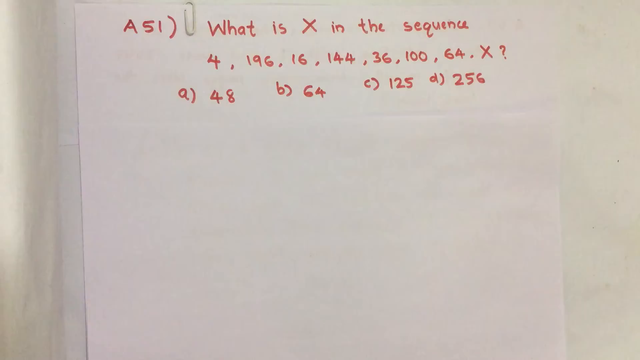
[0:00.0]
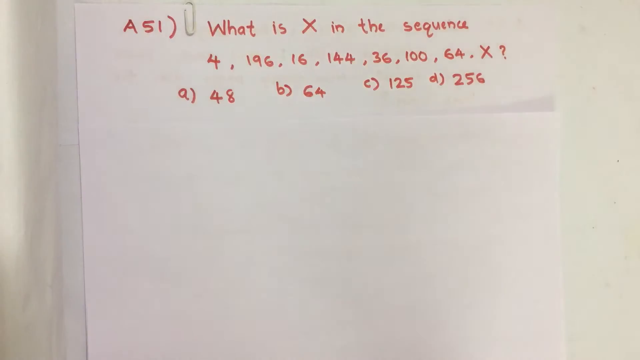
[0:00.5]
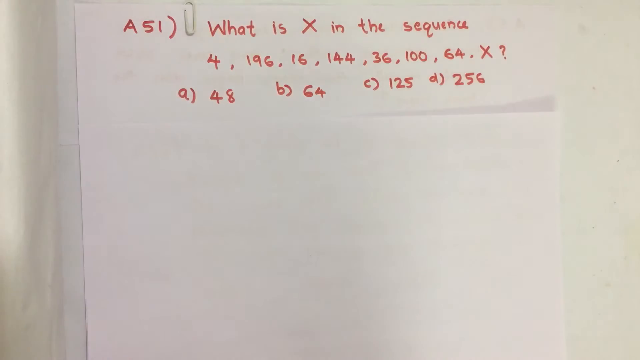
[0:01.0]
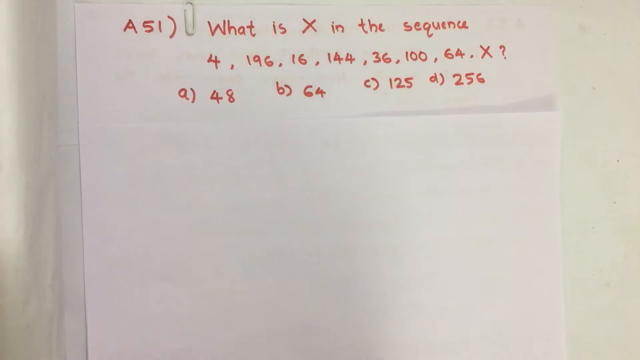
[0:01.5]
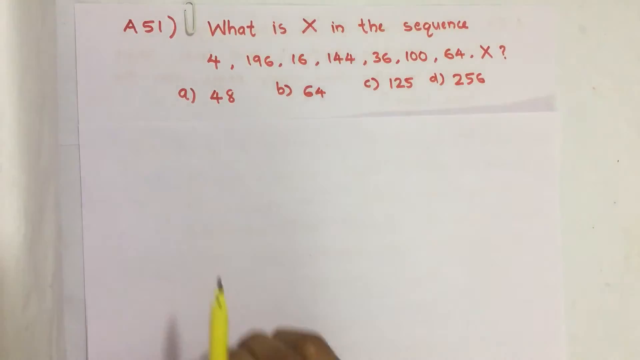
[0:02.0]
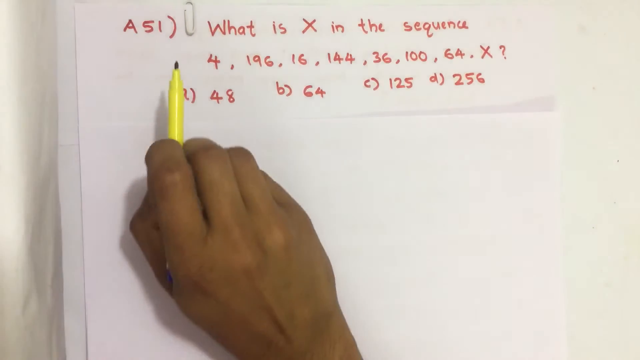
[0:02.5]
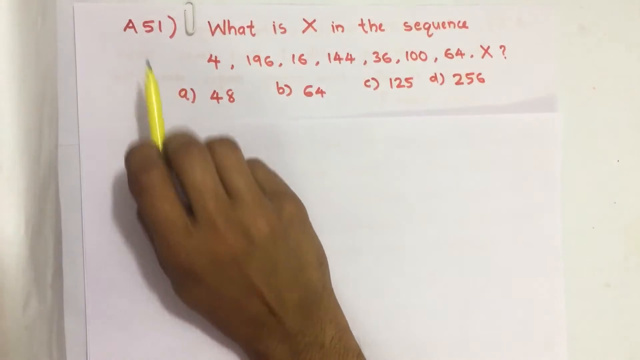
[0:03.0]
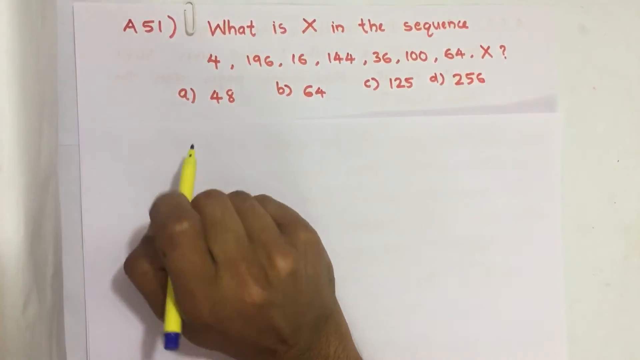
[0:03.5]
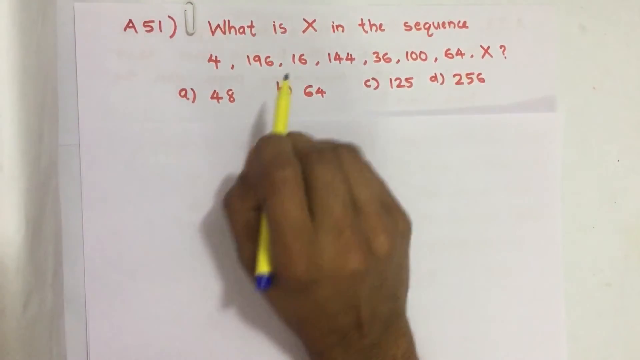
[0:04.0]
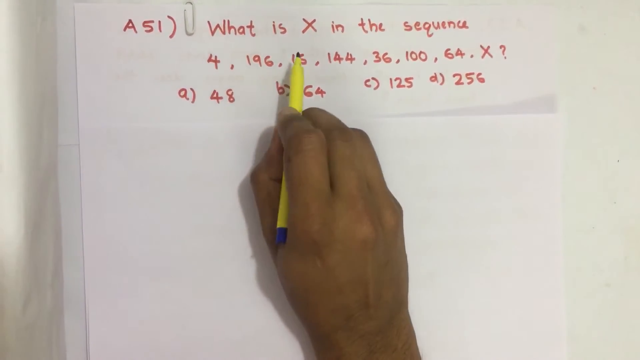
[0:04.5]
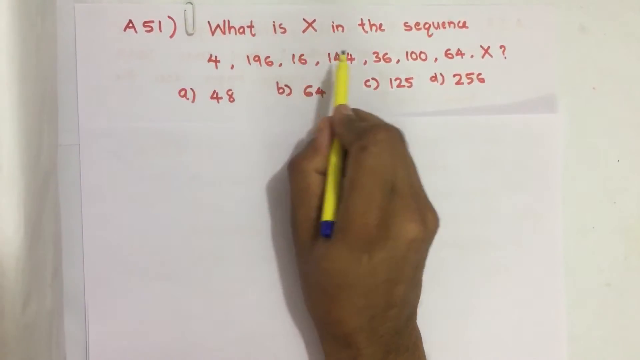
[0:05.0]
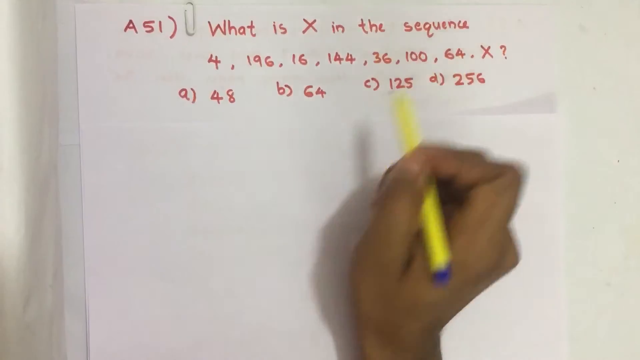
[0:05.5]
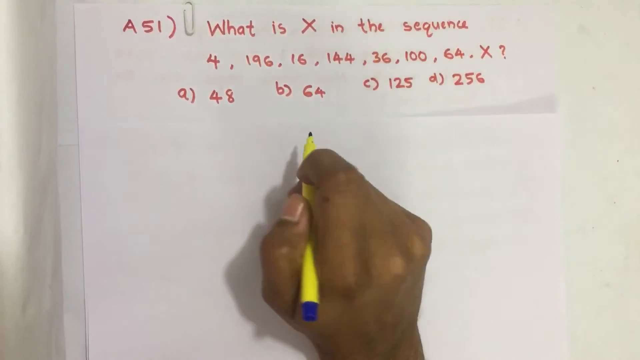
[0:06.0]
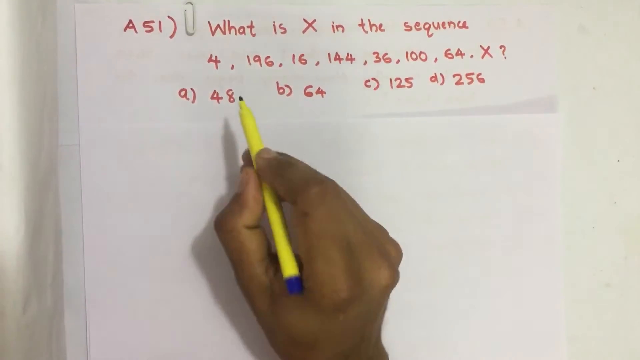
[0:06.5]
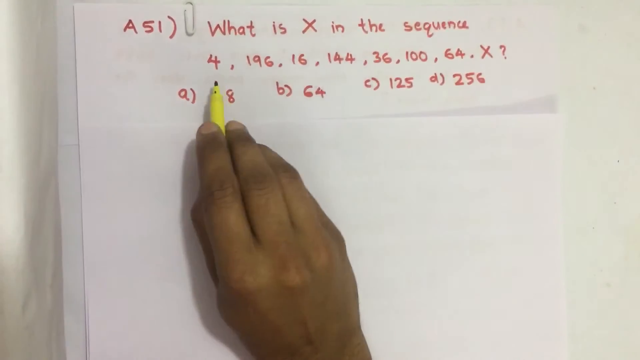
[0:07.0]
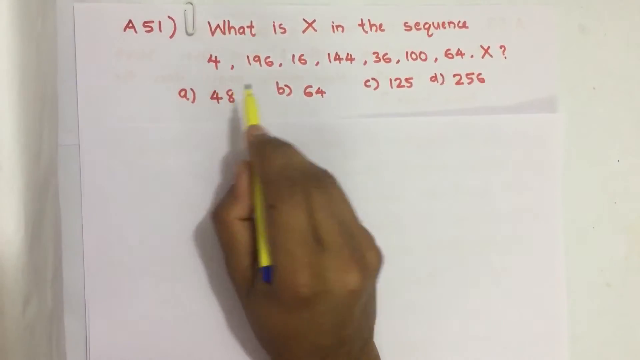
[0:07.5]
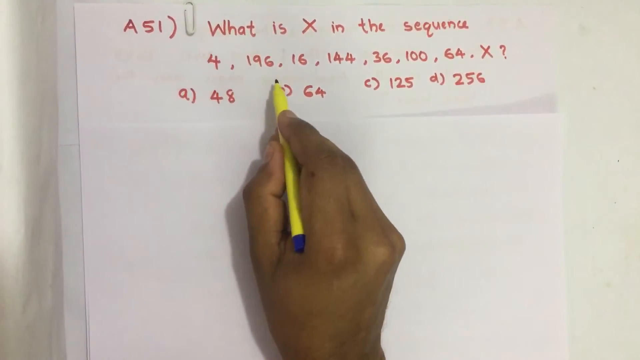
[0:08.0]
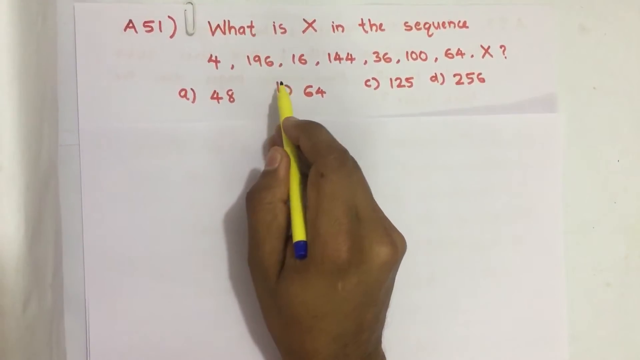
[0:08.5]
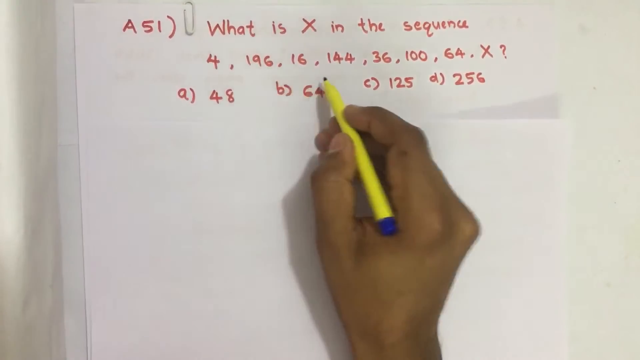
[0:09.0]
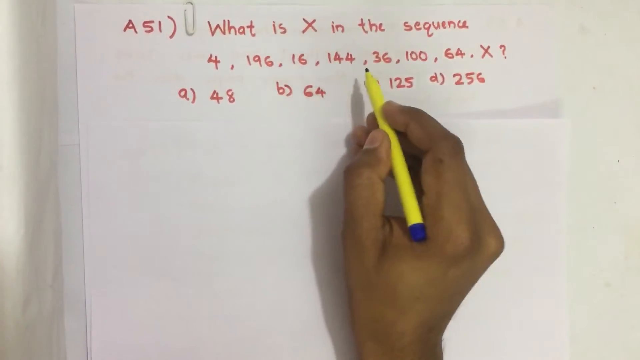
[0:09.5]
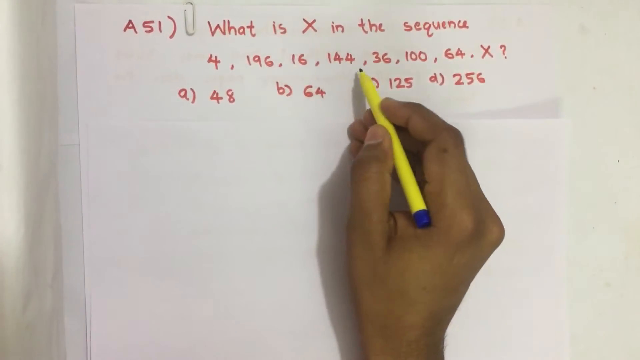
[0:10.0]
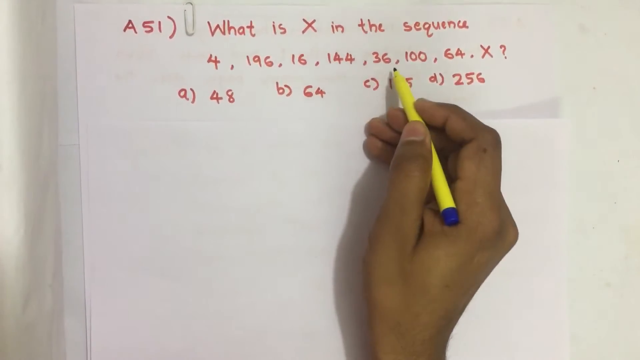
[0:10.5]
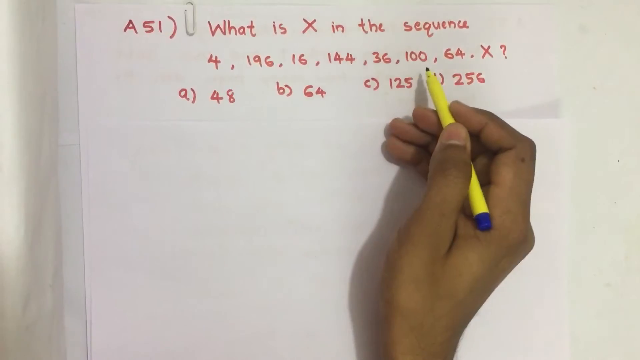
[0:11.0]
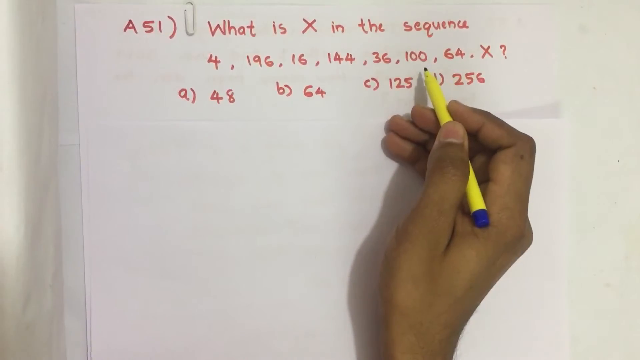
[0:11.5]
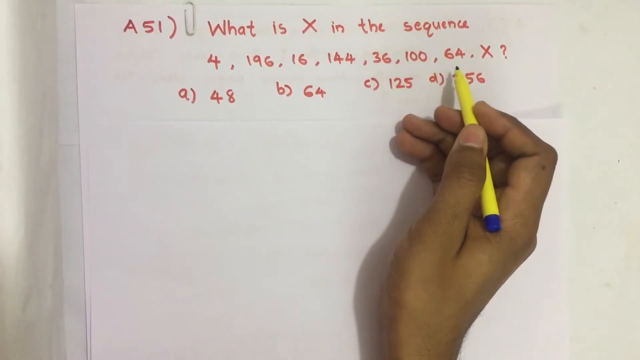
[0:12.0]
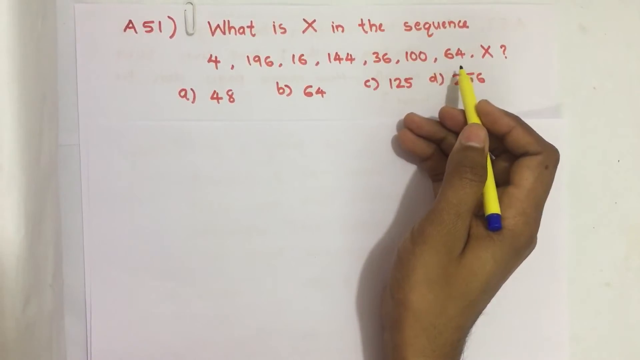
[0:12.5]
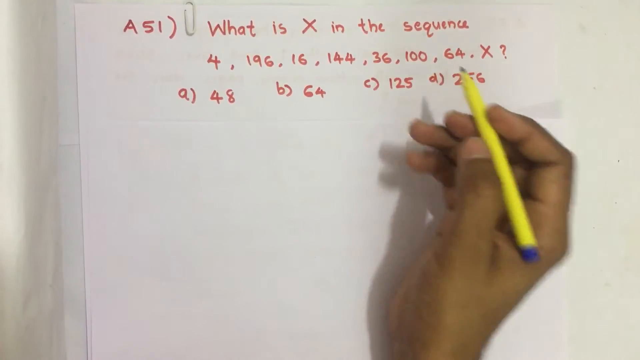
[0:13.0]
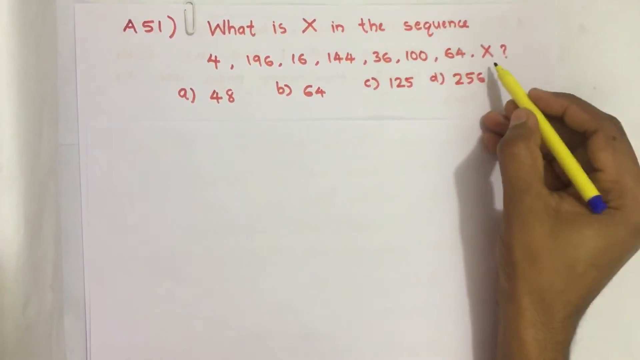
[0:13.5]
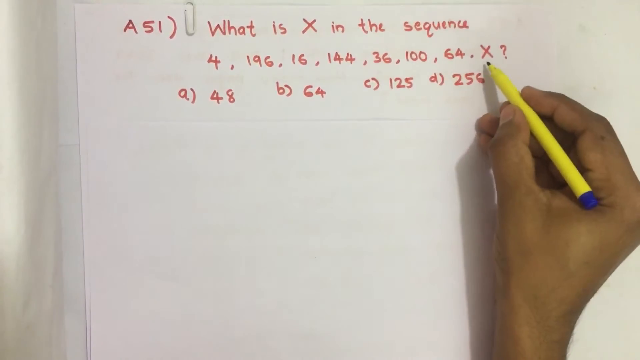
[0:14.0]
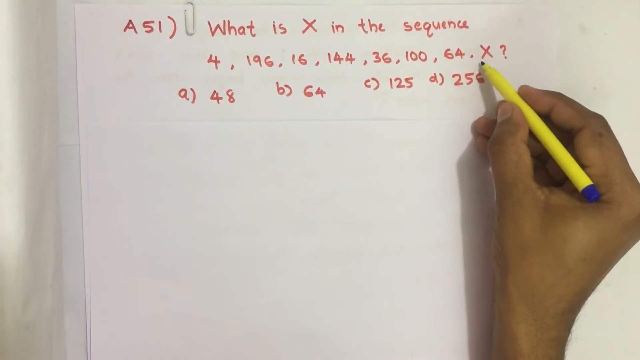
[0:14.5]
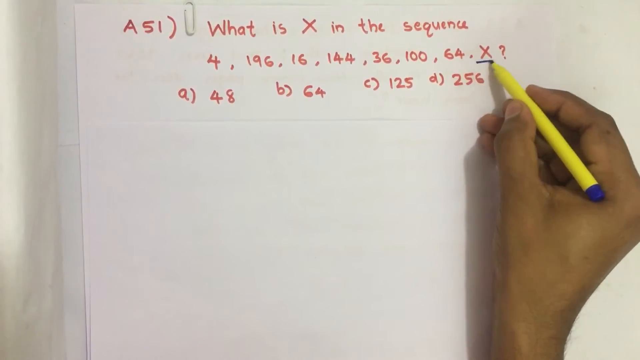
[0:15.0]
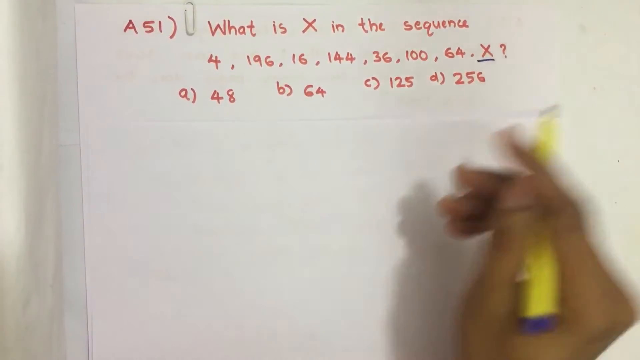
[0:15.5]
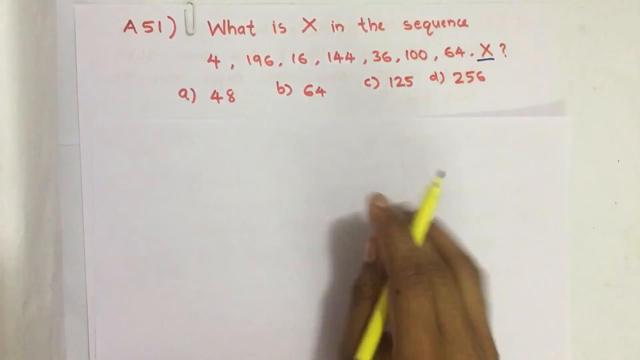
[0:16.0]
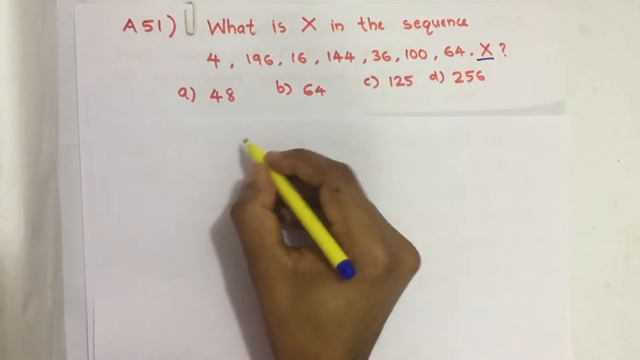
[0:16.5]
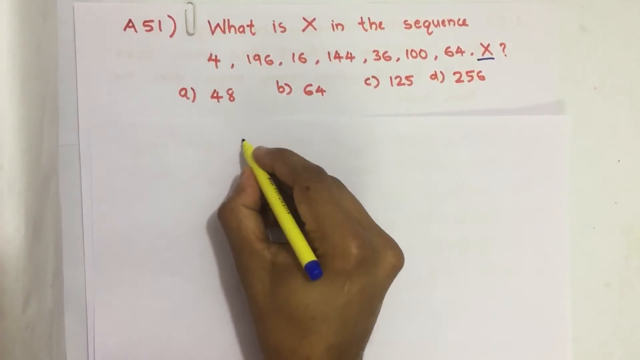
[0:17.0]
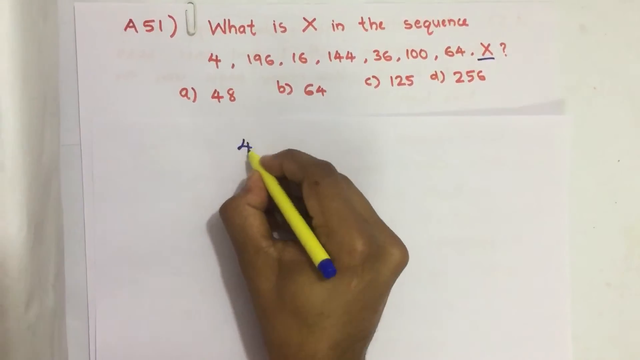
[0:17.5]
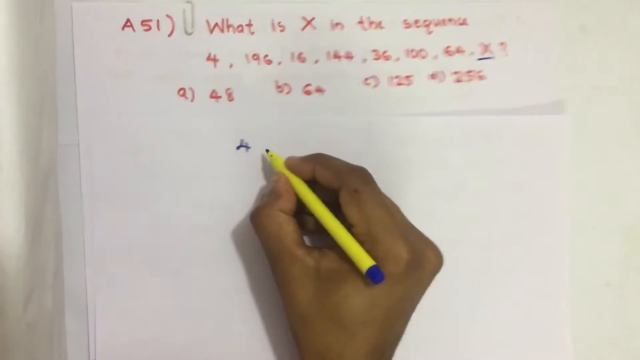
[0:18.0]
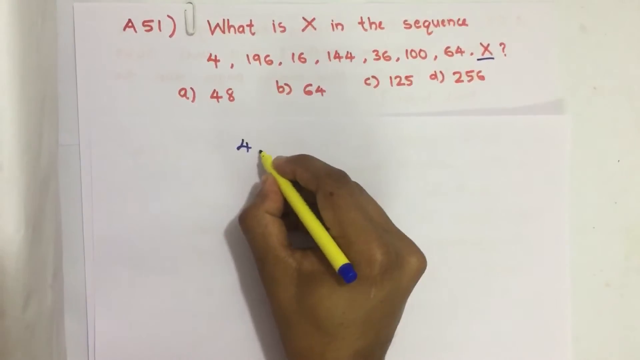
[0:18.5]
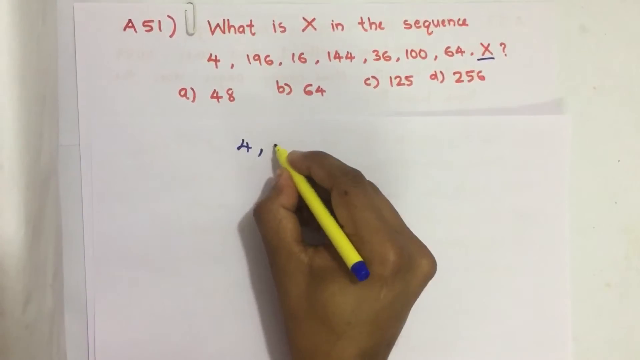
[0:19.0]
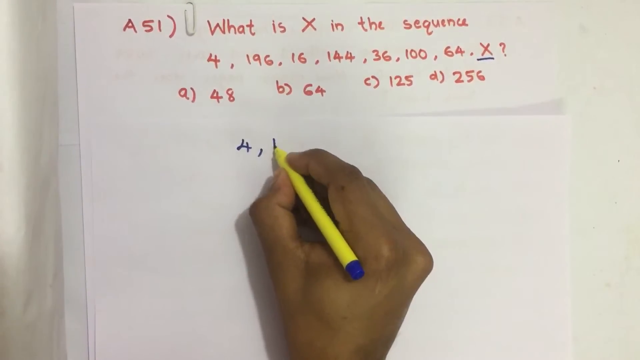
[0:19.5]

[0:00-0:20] A math problem is shown on a white piece of paper with a paperclip at the top, written in red. It reads "what is X in the sequence" and gives the numbers 4, 196, 16, 144, 36, 100, 64, and then X, with the choices A 48, B 64, C 125, or D 256. A person's hand holding a pencil comes into the picture and reads through the problem, pointing to each of the numbers and underlining the letter X. Working in pencil, the person writes down the number 4 and starts to write 196.